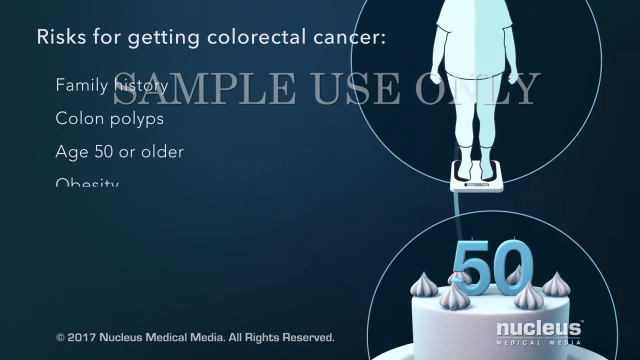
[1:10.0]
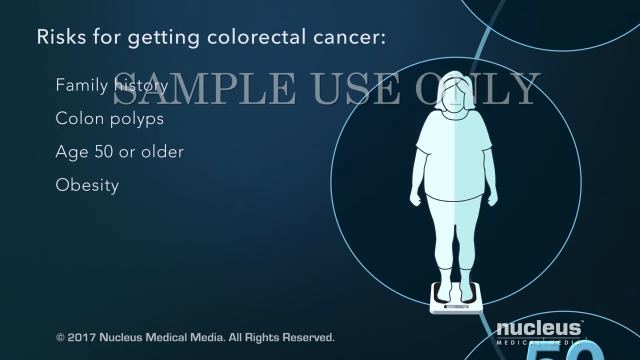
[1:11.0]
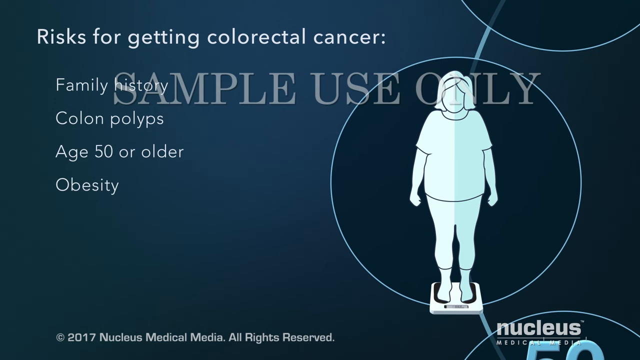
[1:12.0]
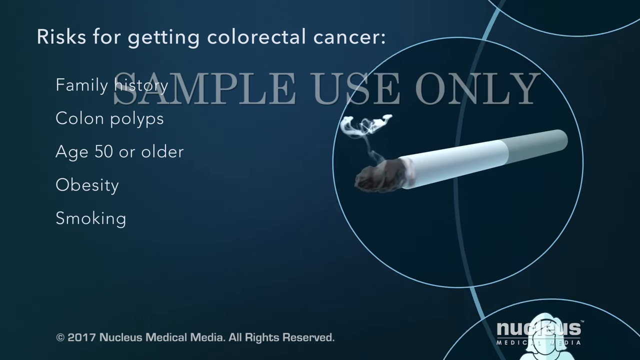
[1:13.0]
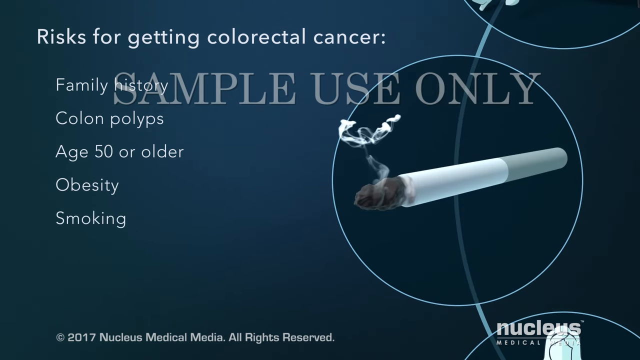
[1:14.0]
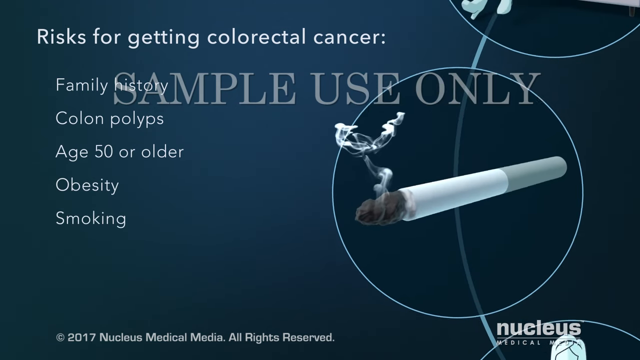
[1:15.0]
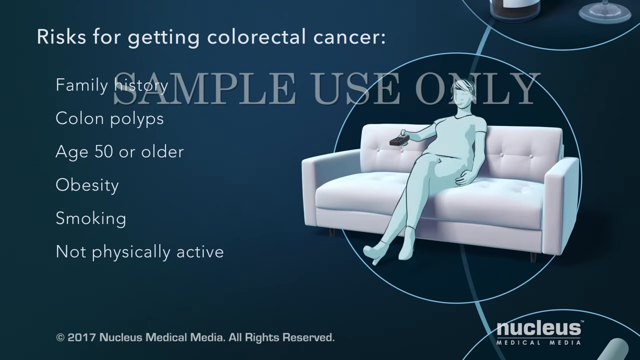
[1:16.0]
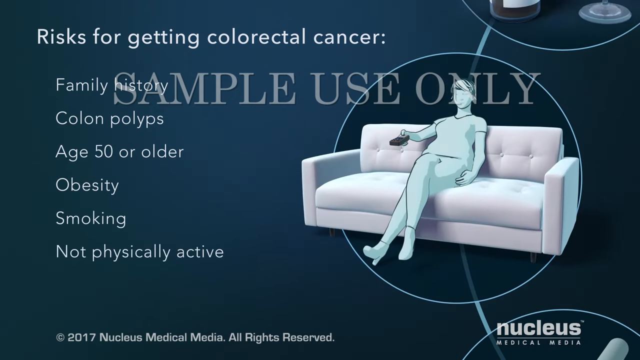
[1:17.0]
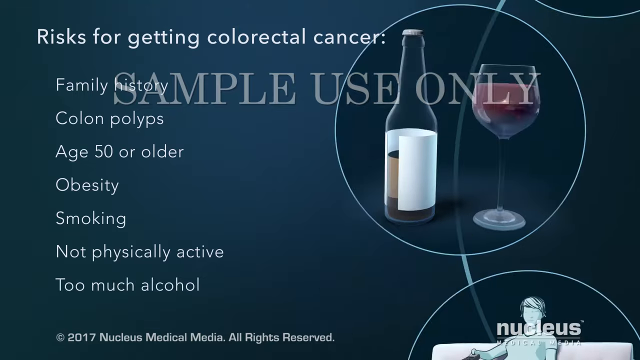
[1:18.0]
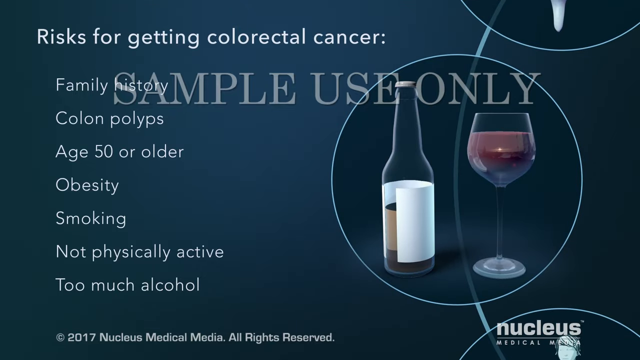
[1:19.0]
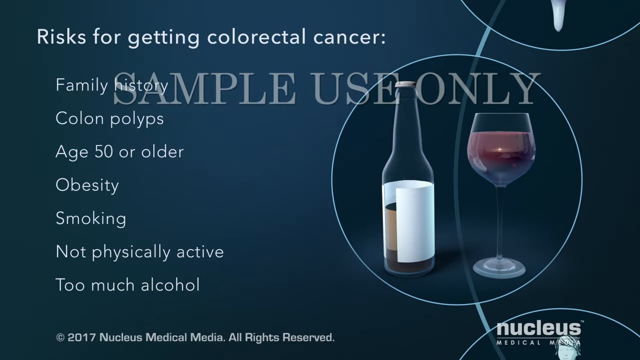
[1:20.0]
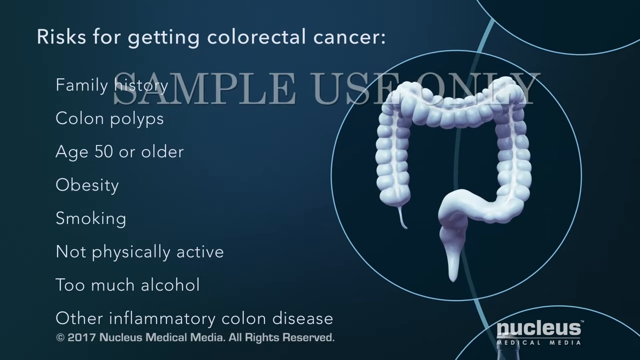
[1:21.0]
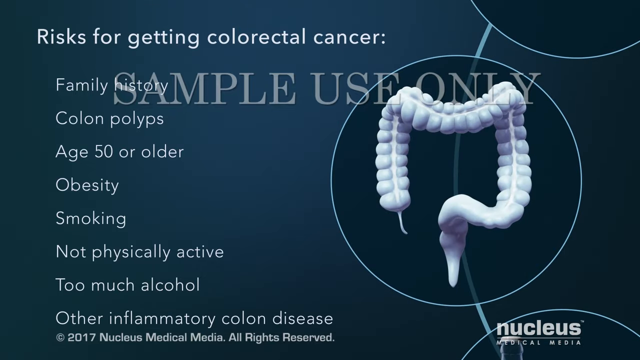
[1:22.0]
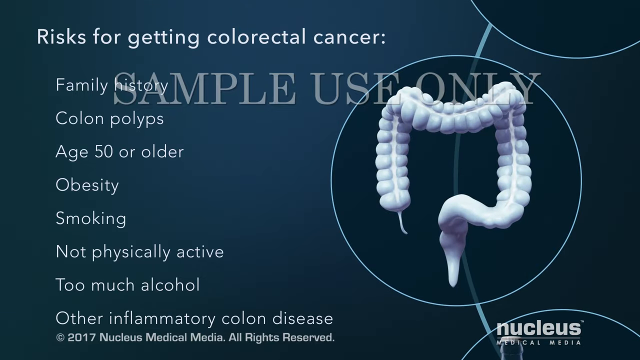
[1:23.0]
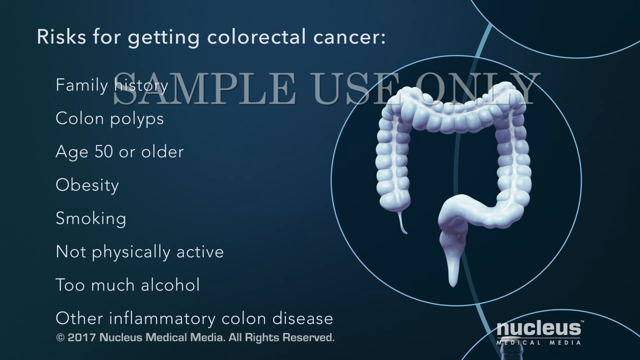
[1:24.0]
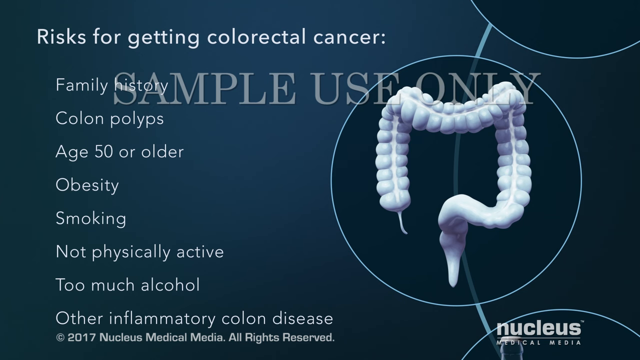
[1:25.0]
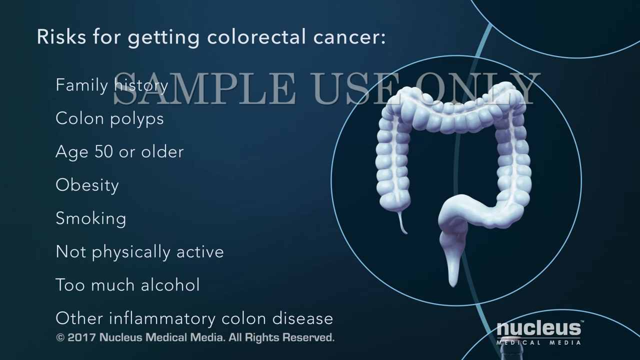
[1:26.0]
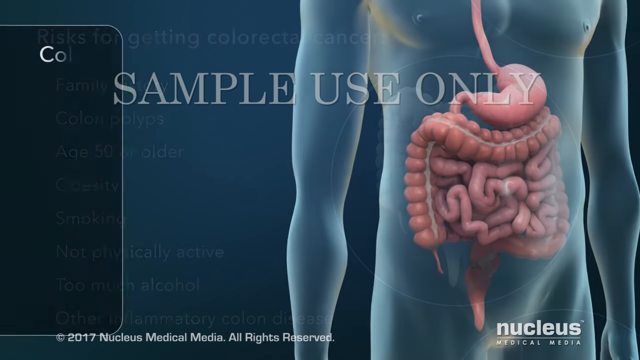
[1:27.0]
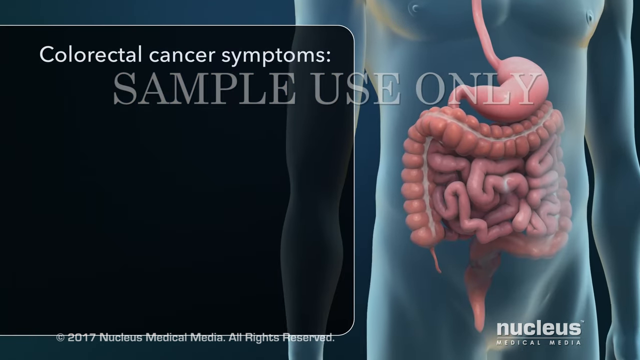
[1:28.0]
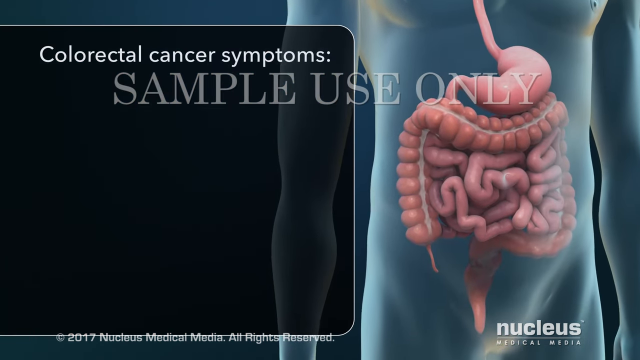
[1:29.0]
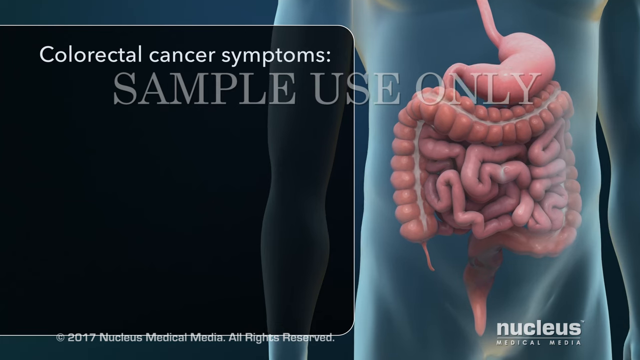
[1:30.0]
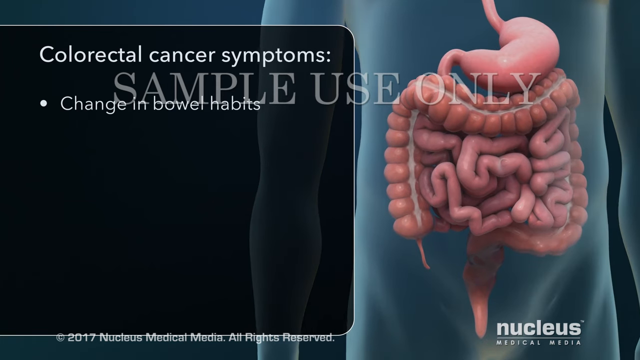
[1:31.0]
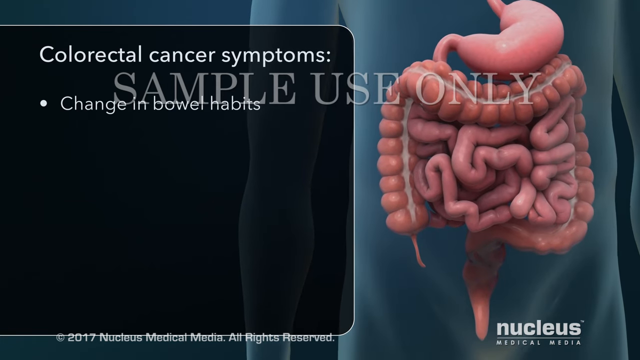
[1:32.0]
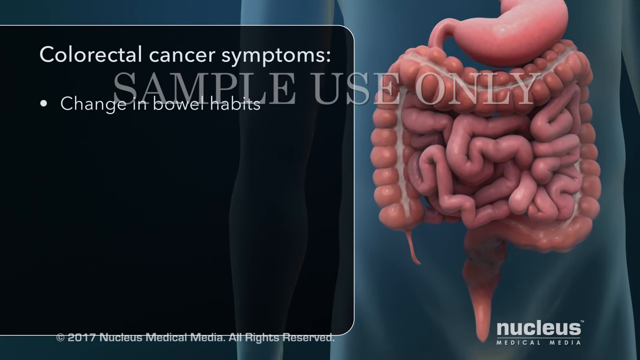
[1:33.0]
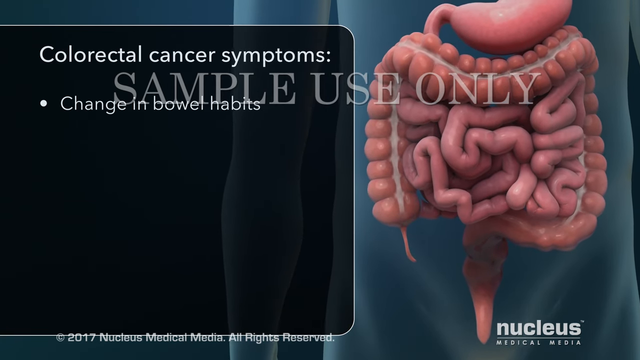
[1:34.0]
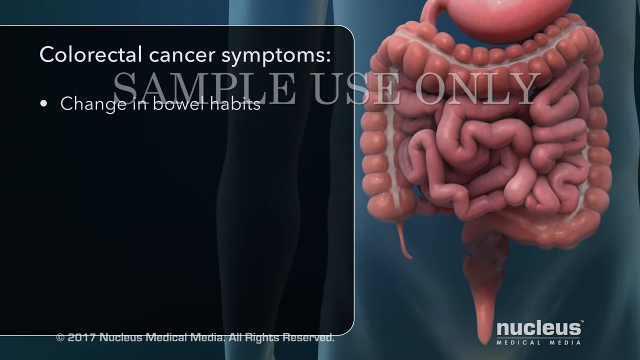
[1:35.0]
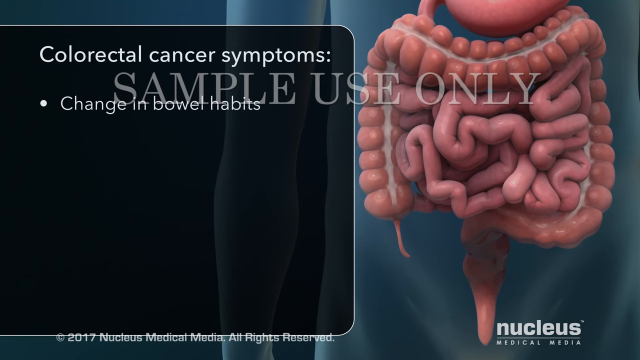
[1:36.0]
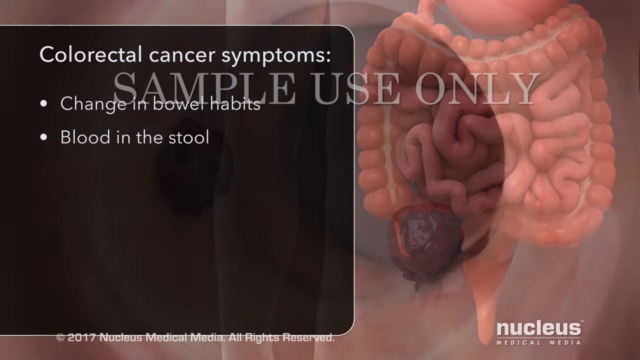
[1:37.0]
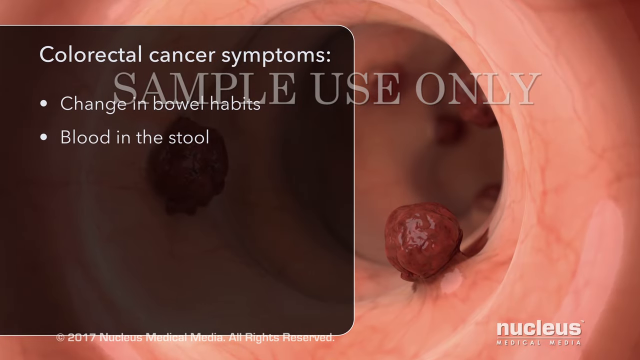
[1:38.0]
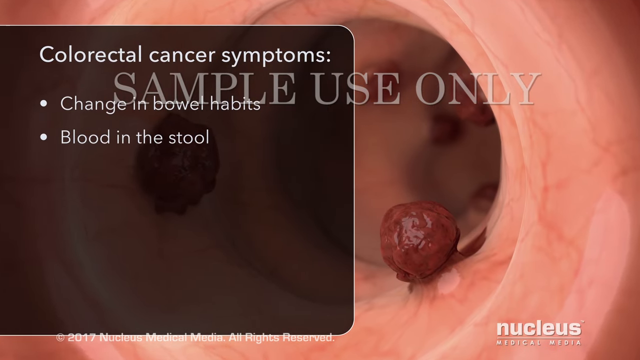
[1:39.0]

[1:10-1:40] A navy title card reads "sample use only" in capital letters, with "understanding colorectal cancer" in white beneath it. It flips to a diagram of a human body, and the view zooms in on the highlighted colon, then the rectum, then the anal canal. Zooming in on the anal canal shows several polyps, labeled "polyps" in white on the screen. The view zooms in to one polyp, showing white abnormal cells that start to turn brown and grow out and down. Zooming in further, the label "cancer cells" appears in black beside them as they go down through the stem of the polyp. "Sample use only" remains across the top as the cells move through and into the bloodstream. White text then pops up across the top reading "risks for getting colorectal cancer," listing "family history," "colon polyps," "age 50 or older," "obesity," "smoking," "not physically active," "too much alcohol" and "other inflammatory colon disease." Next, "colorectal cancer symptoms" pops up, listing "change in bowel habits," "blood in the stool" and "feeling unable to empty the bowel."